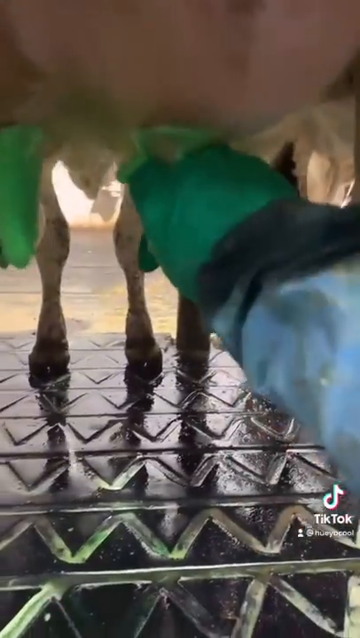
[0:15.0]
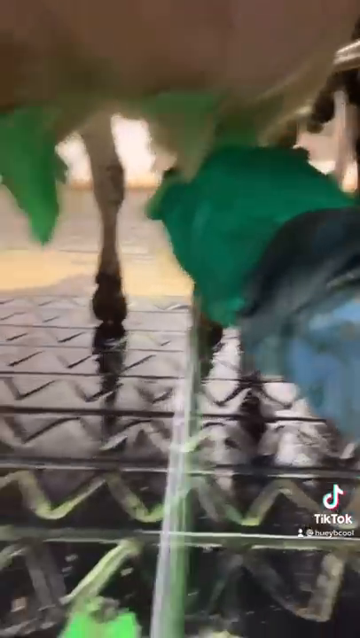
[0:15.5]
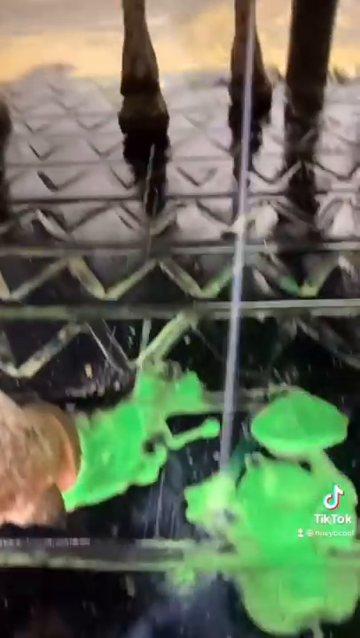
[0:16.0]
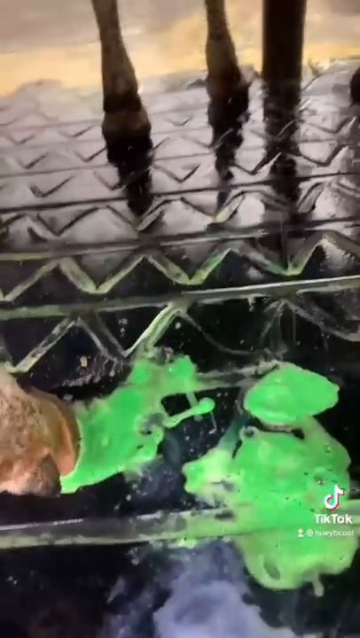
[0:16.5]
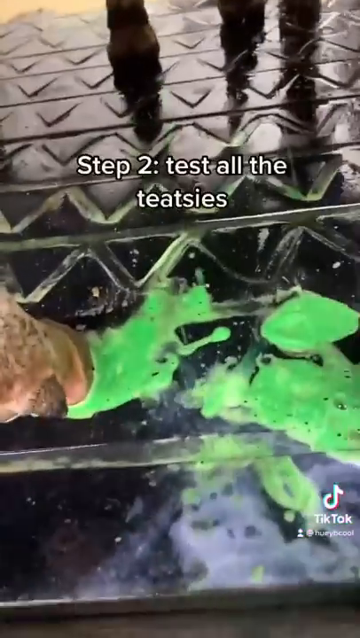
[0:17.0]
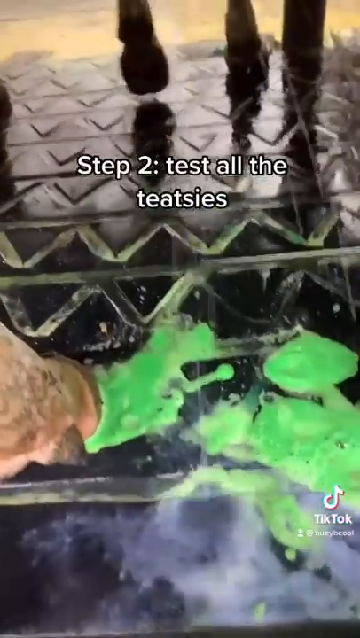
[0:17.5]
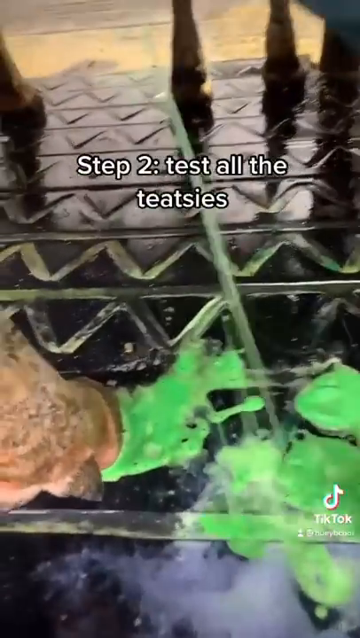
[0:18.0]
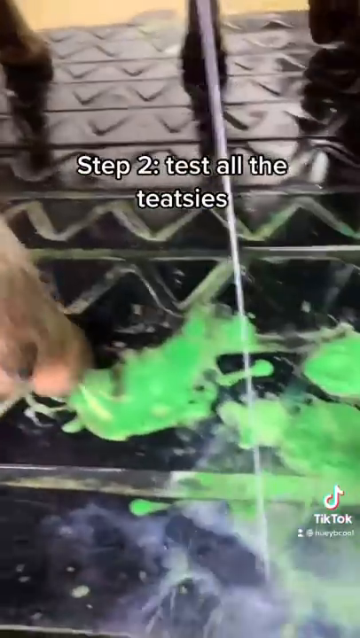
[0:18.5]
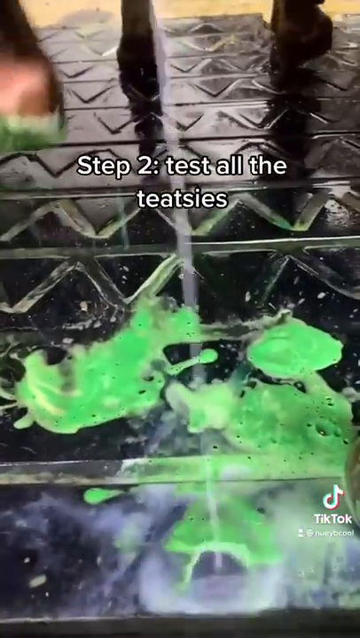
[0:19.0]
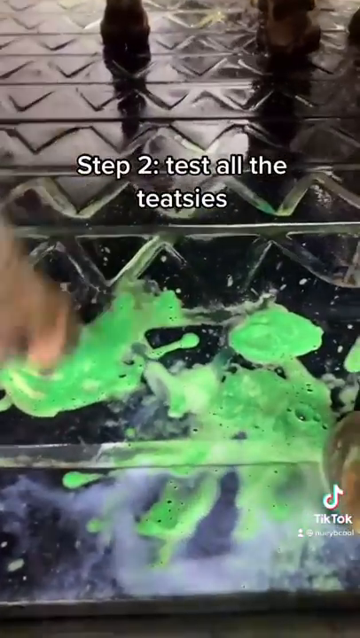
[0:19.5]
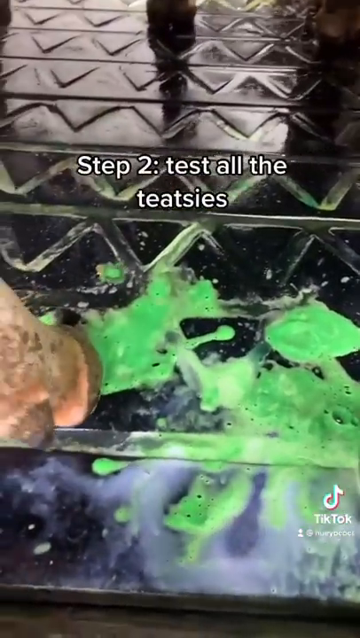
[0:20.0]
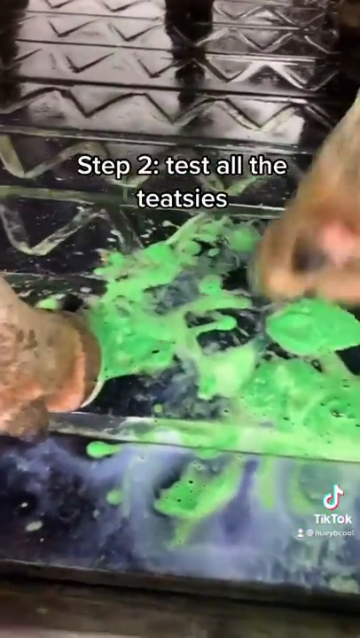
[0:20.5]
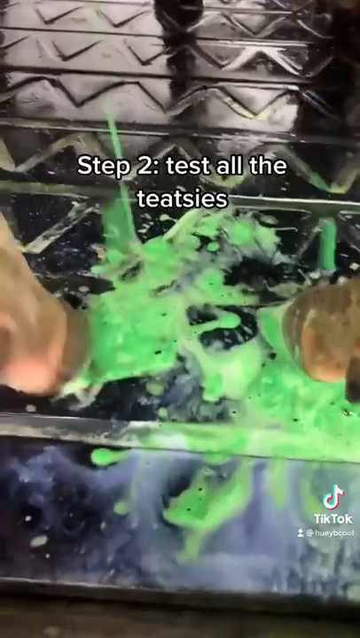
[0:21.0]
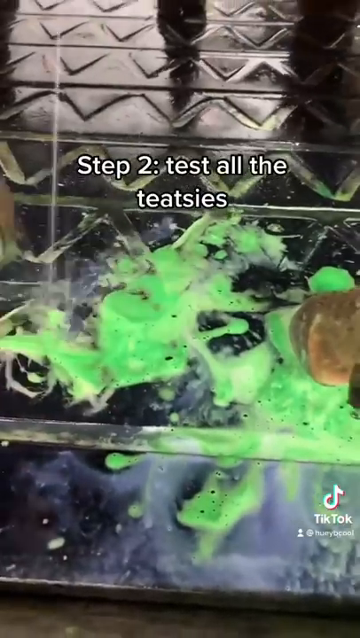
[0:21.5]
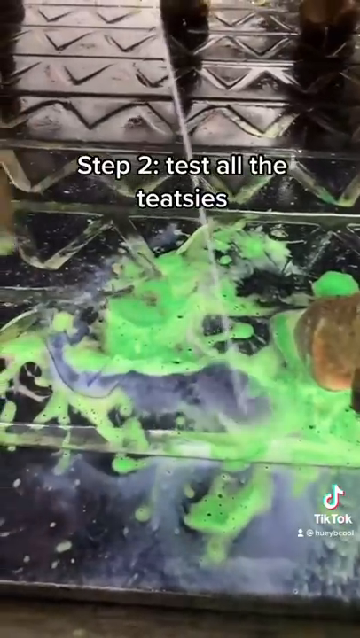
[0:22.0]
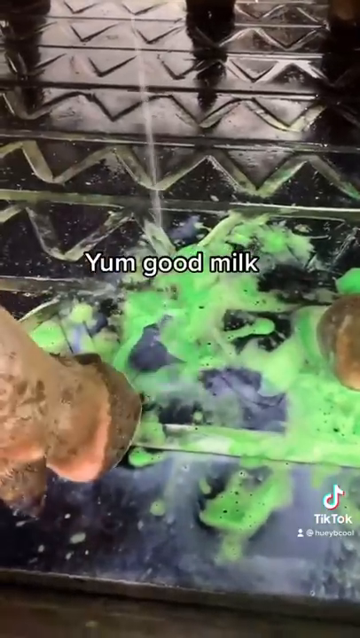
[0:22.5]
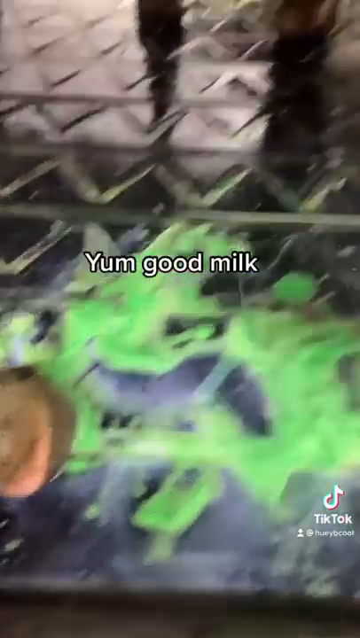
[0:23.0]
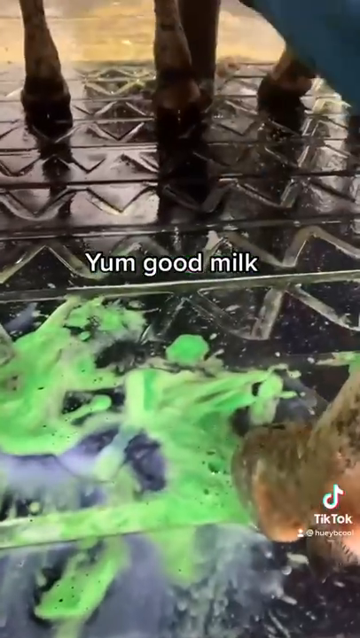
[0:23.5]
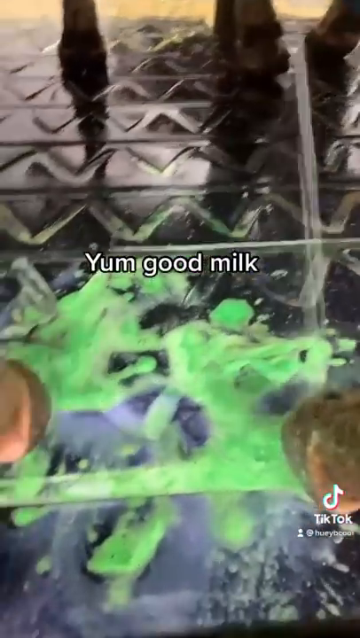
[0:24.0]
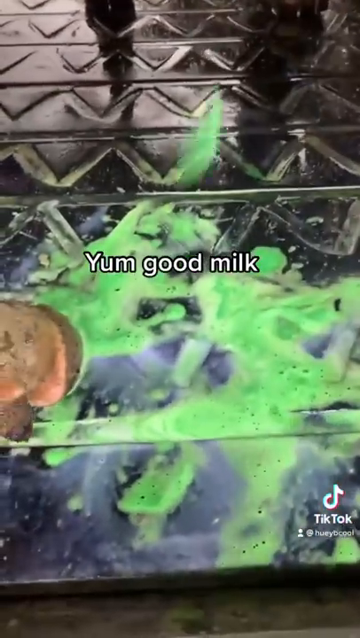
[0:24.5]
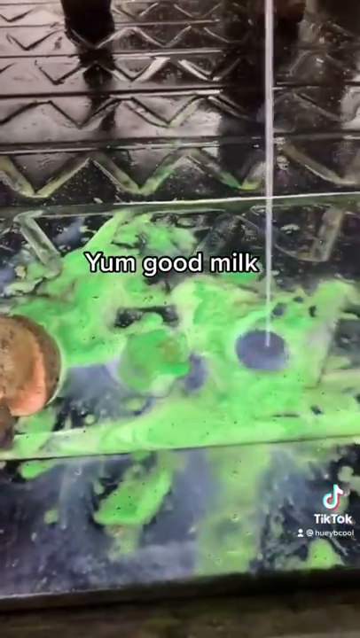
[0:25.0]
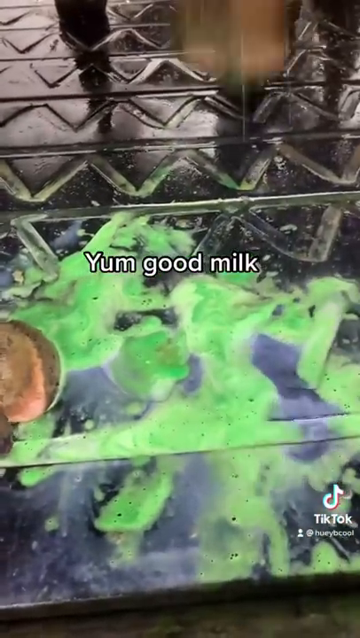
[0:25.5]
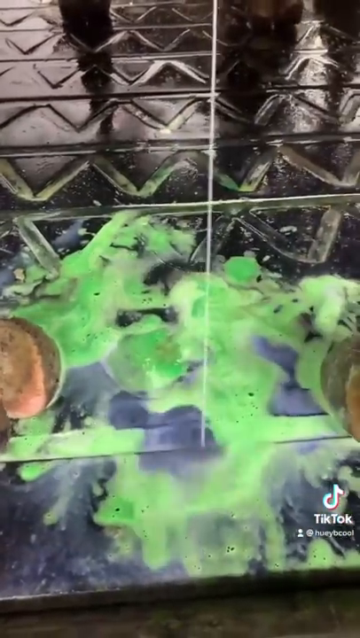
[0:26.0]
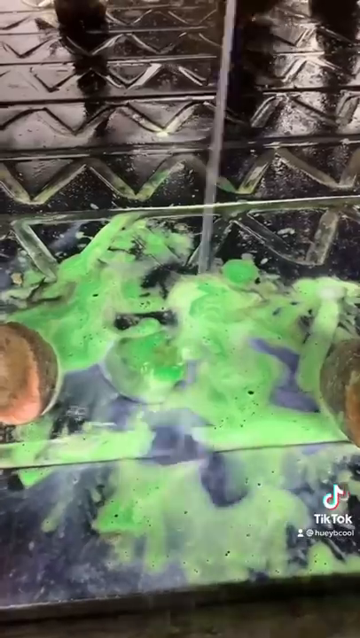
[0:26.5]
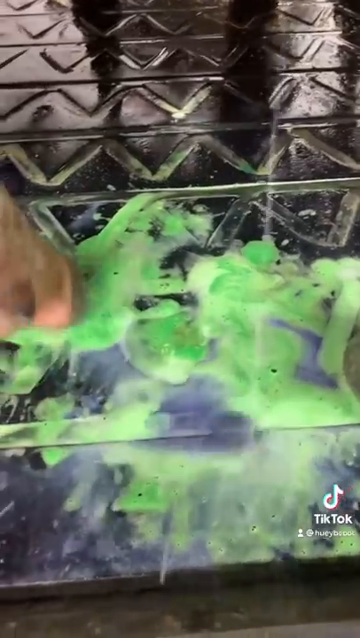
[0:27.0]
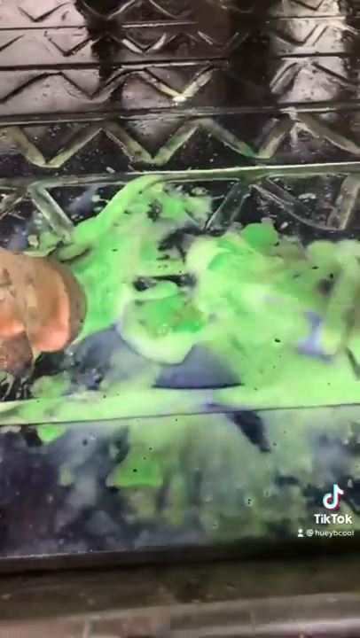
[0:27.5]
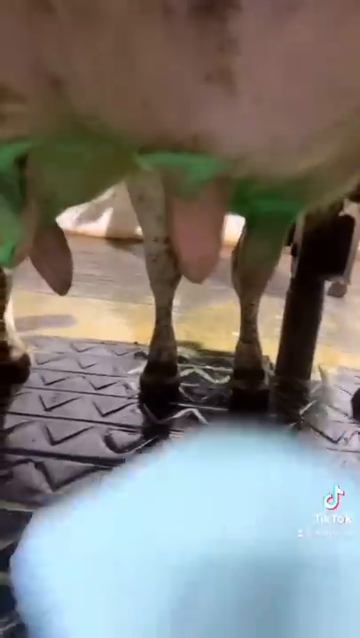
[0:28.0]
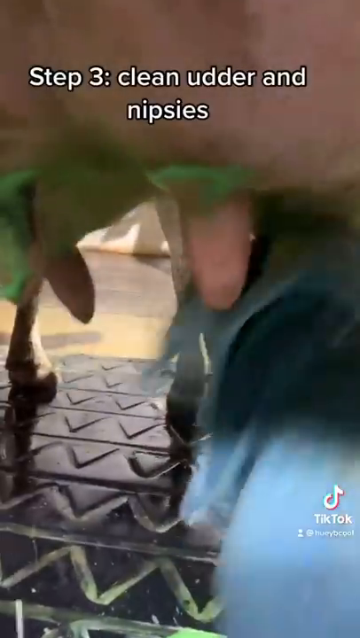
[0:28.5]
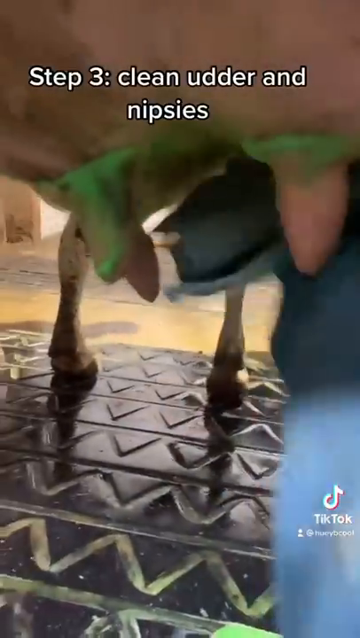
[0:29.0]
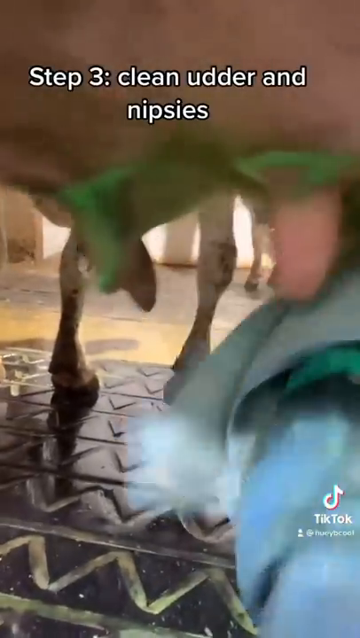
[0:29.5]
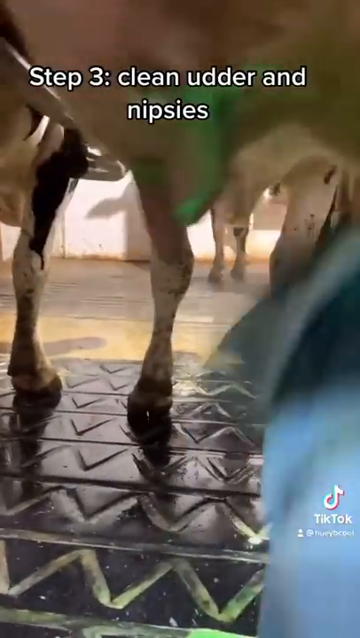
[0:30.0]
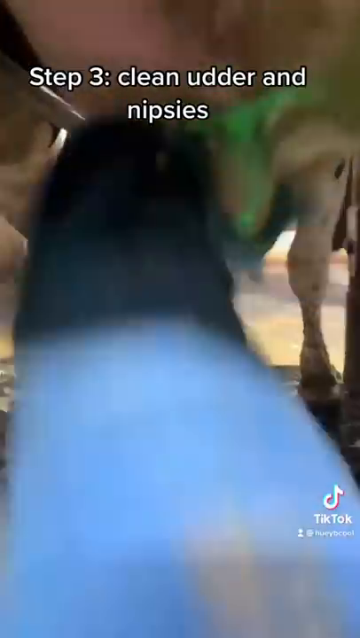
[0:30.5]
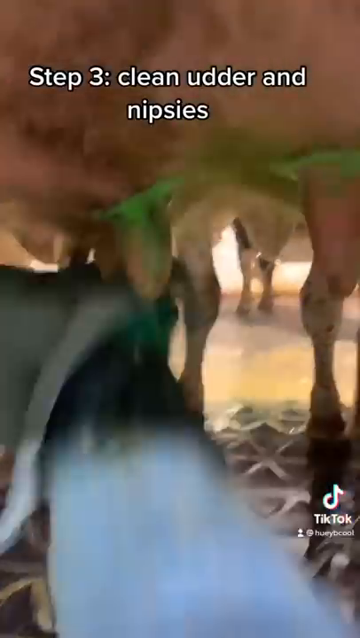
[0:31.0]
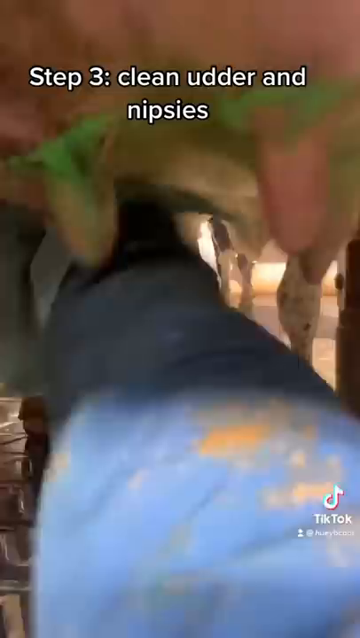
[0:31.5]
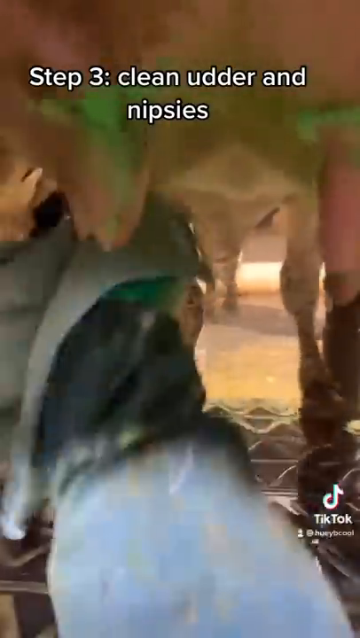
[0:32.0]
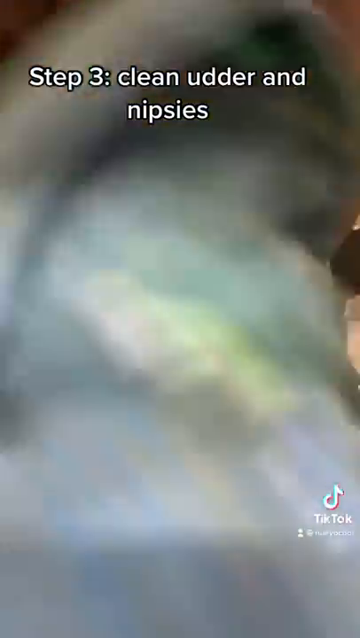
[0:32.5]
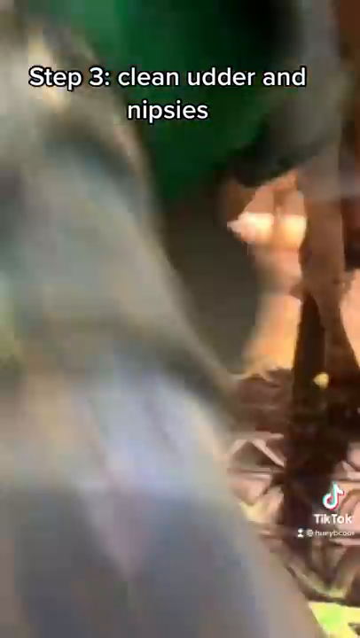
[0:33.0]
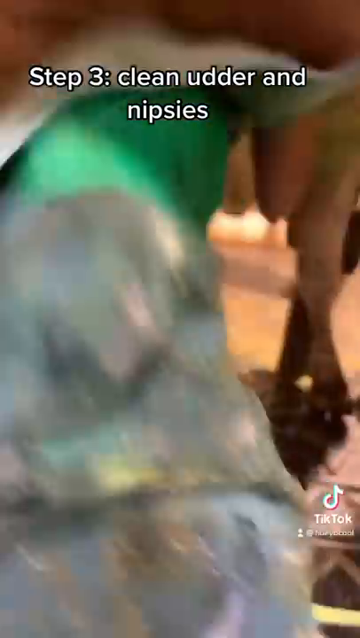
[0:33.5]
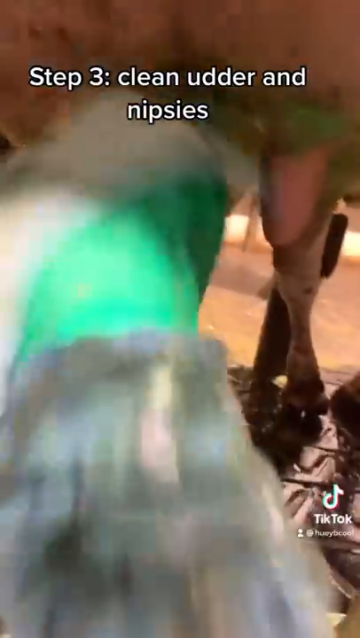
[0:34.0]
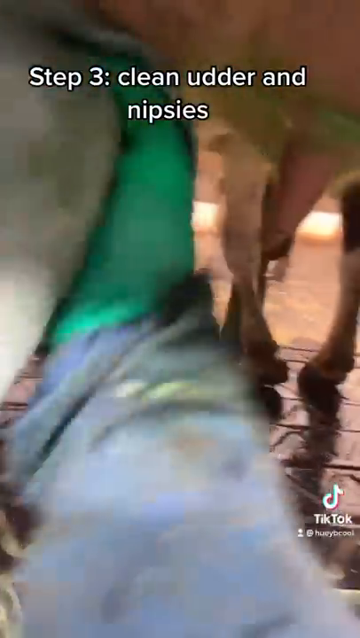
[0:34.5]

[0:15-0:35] The video concerns how to milk a cow, and a person is collecting milk from the cow. The milk appears to be very good, with a clean udder and nipples. After collecting the milk, the person cleans the milk buds.